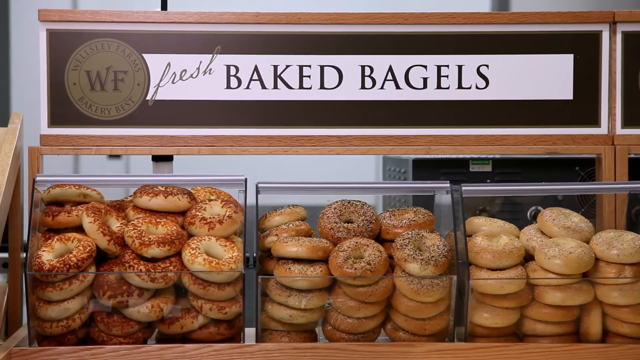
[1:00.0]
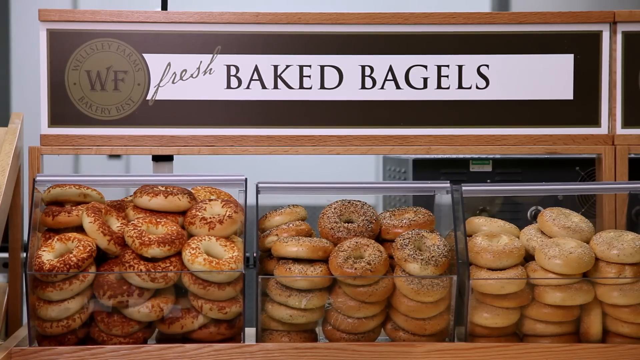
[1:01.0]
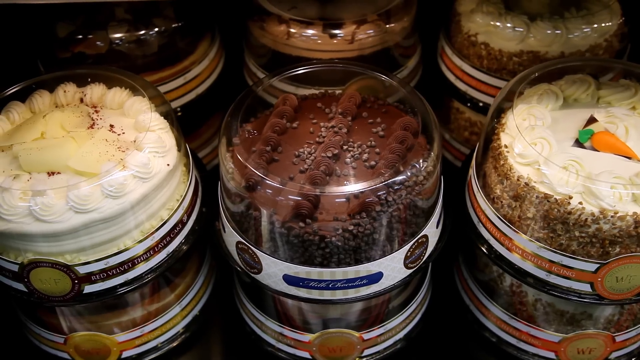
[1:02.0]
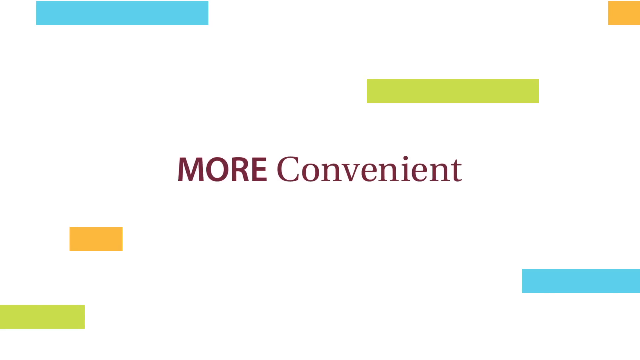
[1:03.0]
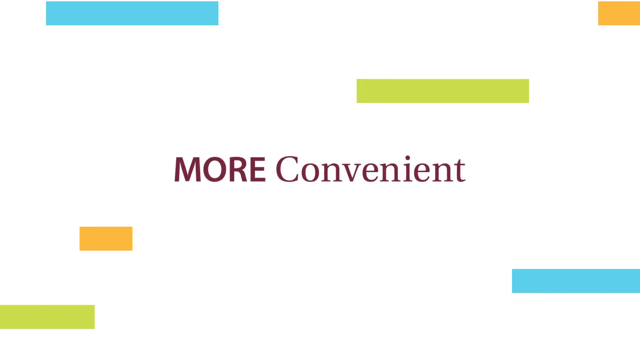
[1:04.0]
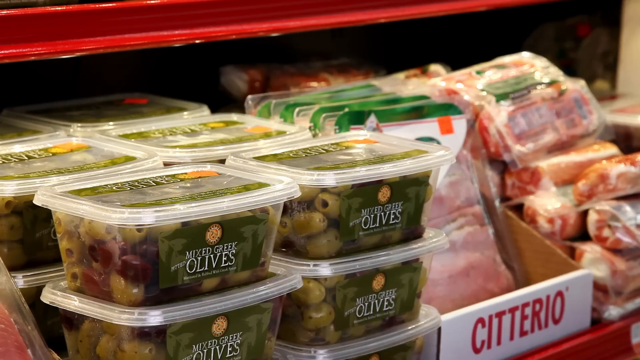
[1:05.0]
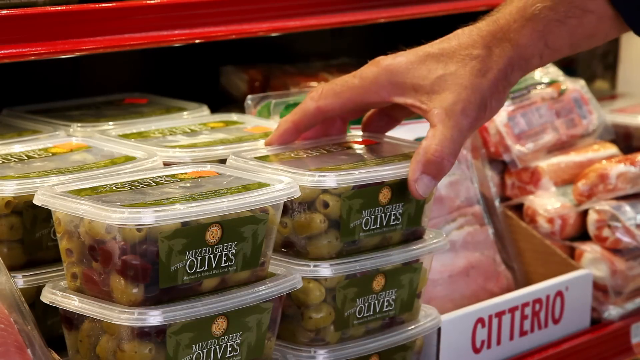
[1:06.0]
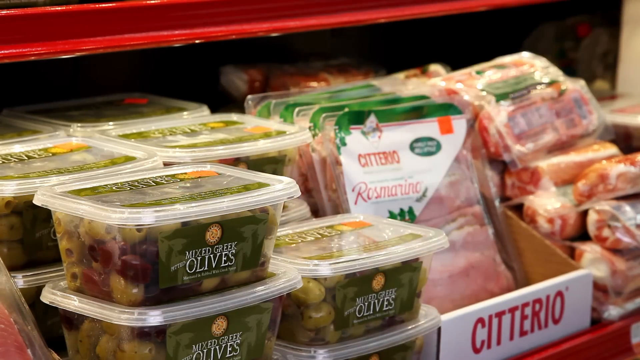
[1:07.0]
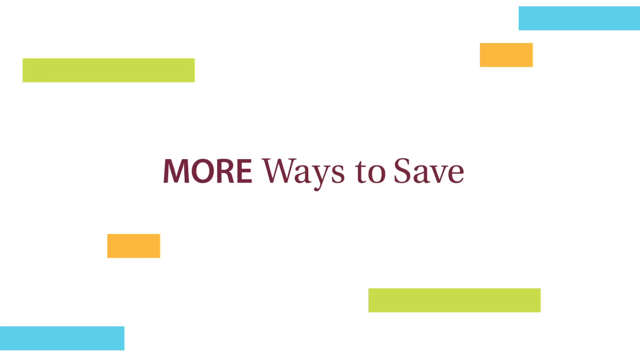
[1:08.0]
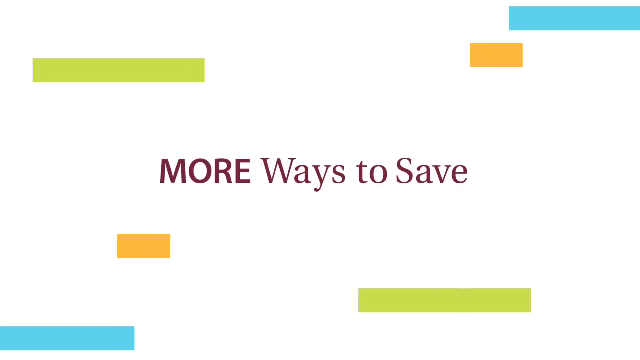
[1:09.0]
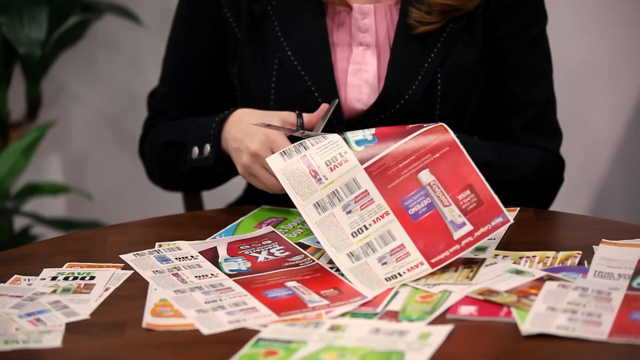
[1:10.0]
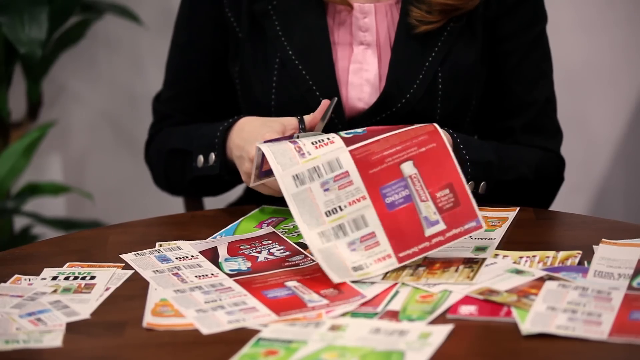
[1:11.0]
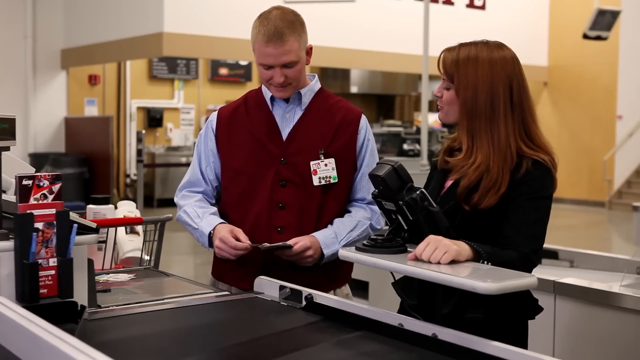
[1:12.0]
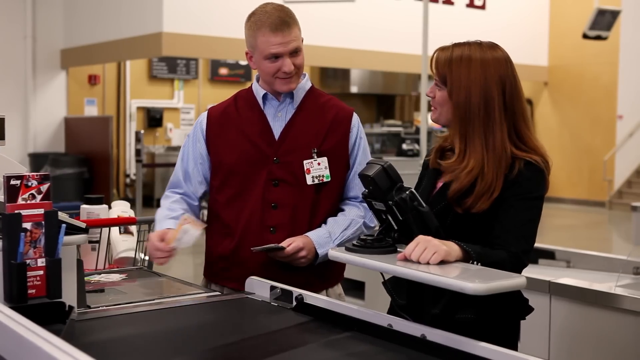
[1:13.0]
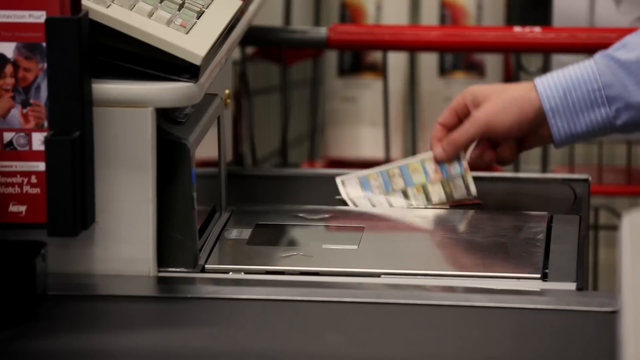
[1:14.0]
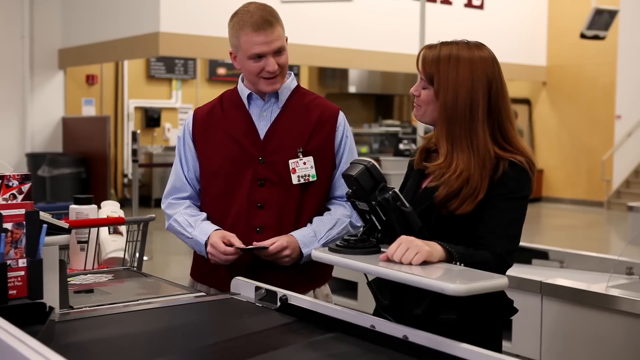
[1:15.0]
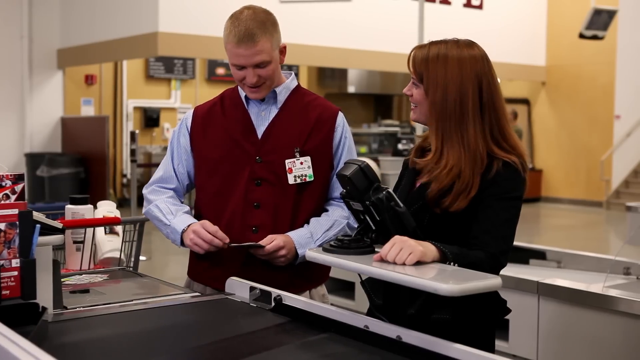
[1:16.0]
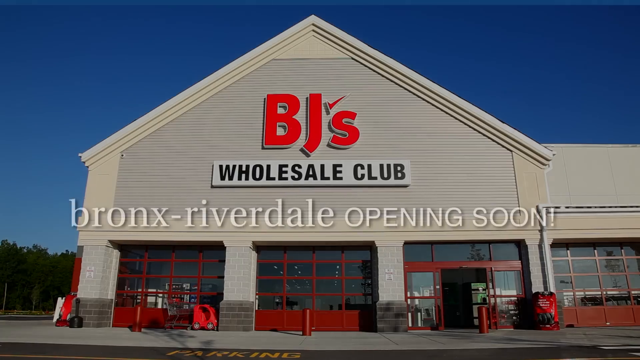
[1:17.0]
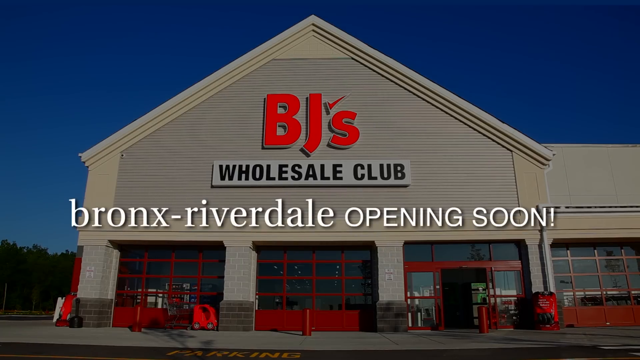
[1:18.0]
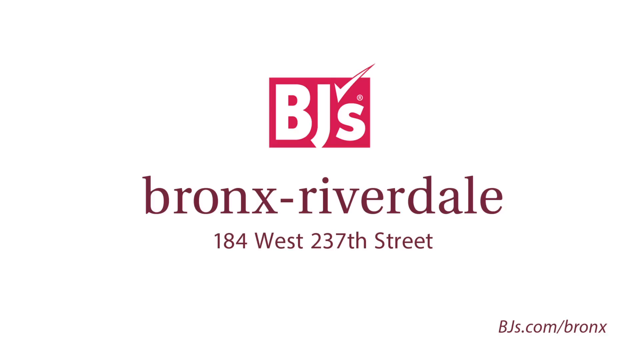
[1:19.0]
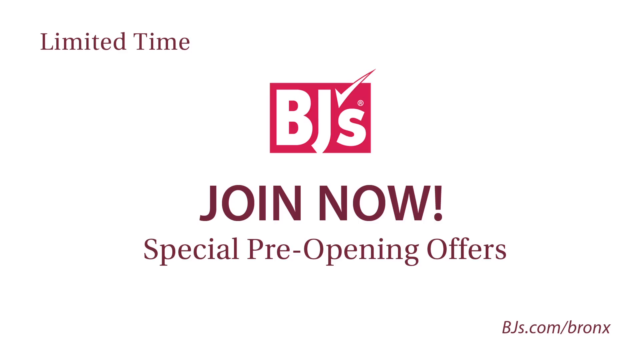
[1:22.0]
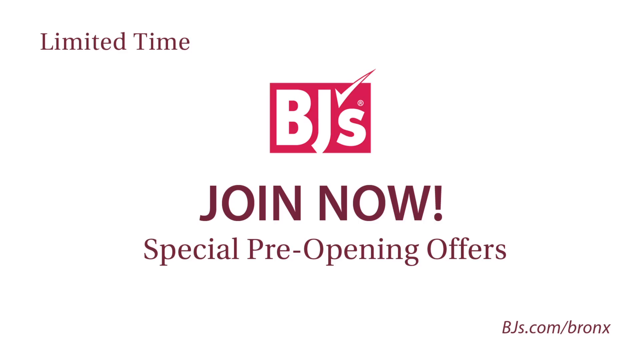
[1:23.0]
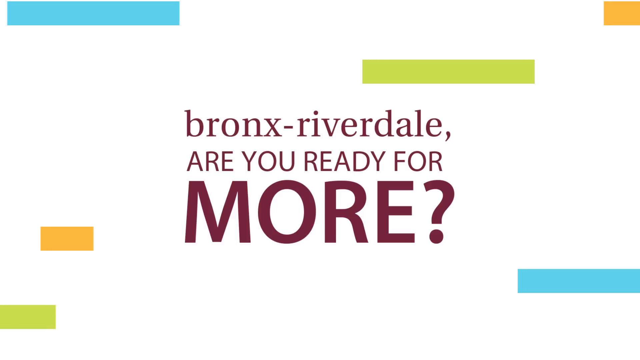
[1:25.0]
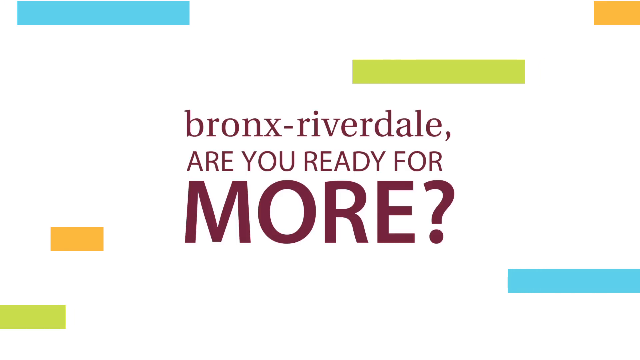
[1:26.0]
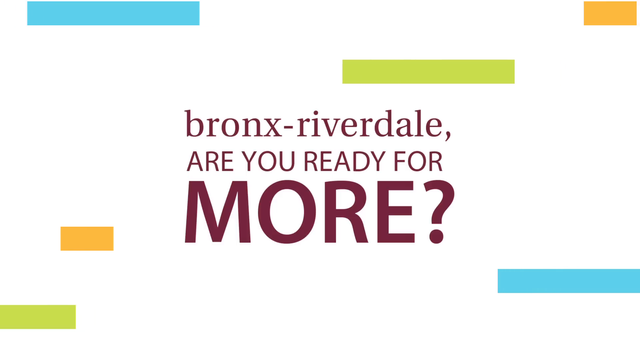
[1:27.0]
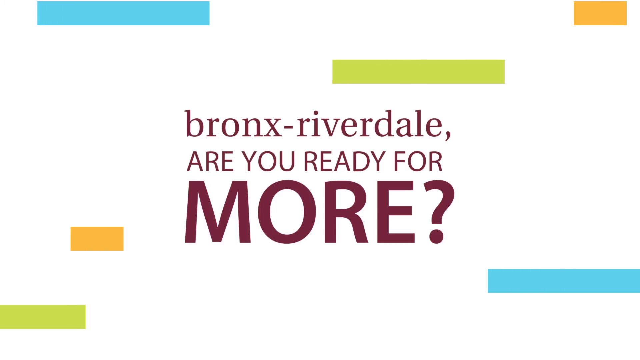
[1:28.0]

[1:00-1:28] The bakery section appears, with the words "fresh-baked bagels" and, underneath, three containers holding three types of bagels. Next come some cakes, all packaged in plastic containers: in the middle a full chocolate cake, to the left a white cake and on the right a carrot cake. Once again the white background with geometric shapes appears, with the words "more convenient" in the middle. A close-up shows some olive packages and a hand grabbing one of them. Once again the white background appears, with the text "more ways to save" in the middle. A person sat at a table cuts coupons out of newspapers. Some staff members are standing near the cash counters, passing the coupons over the scanner. Once again the front entrance of the supermarket is shown with the text "Bronx Riverdale opening soon" in the middle. The footage then disappears, leaving a white background with the BJ's logo and underneath the text "Bronx Riverdale, 184 West 237th Street". The logo remains while a new text appears underneath reading "Join now, special pre-opening offers". Finally the image changes to the colorful shapes with the text "Bronx Riverdale, are you ready for more?" in the middle.